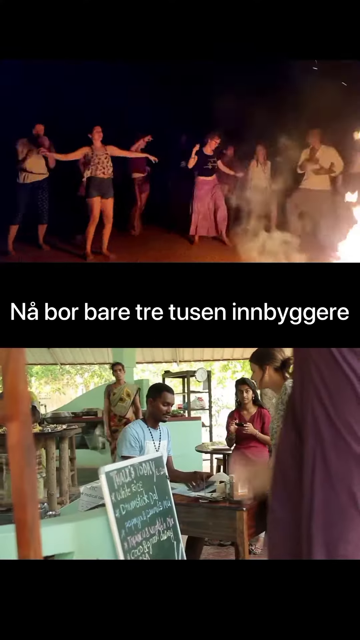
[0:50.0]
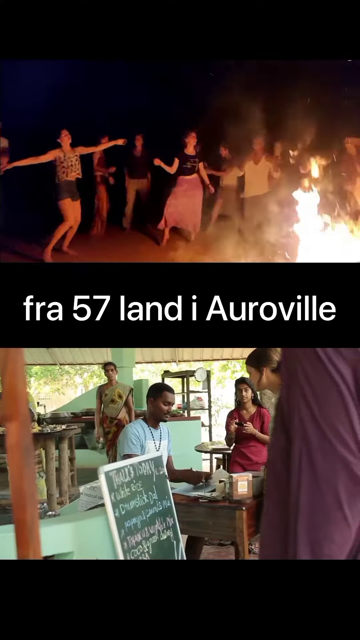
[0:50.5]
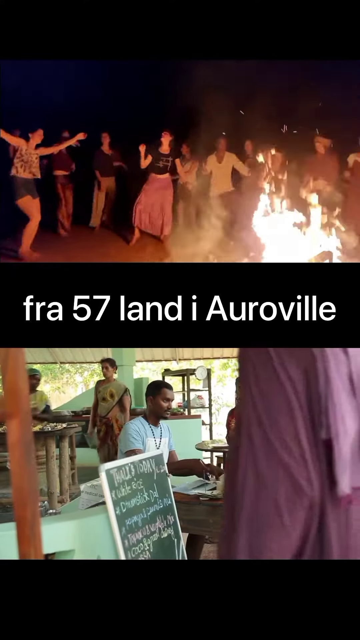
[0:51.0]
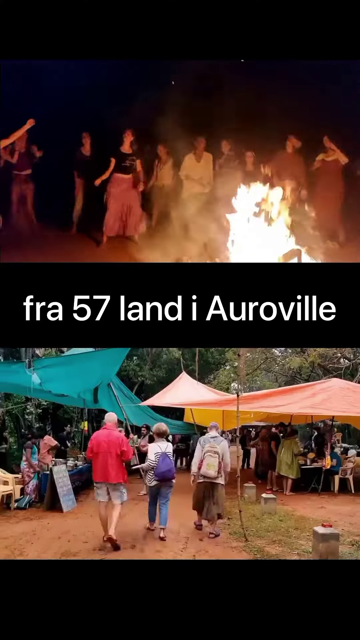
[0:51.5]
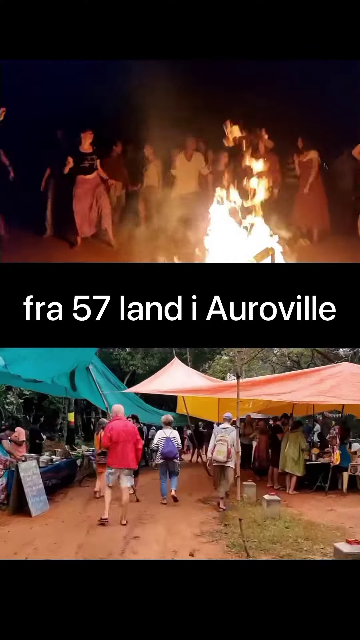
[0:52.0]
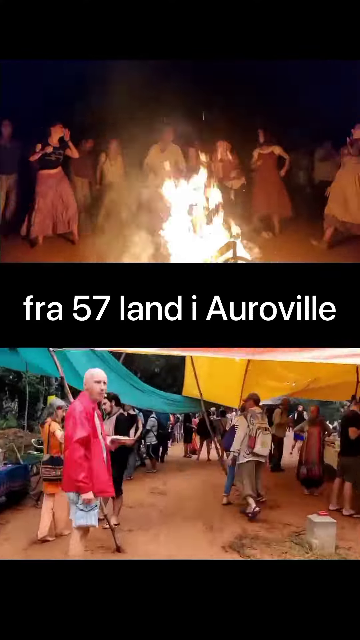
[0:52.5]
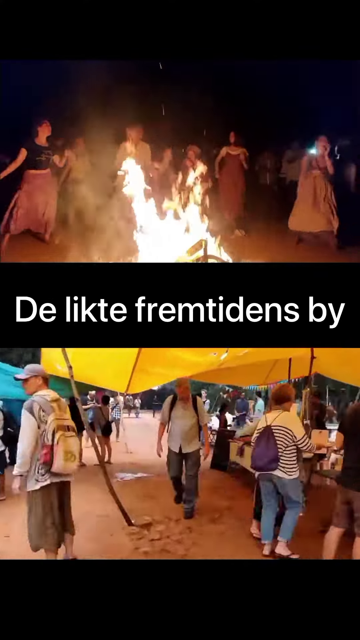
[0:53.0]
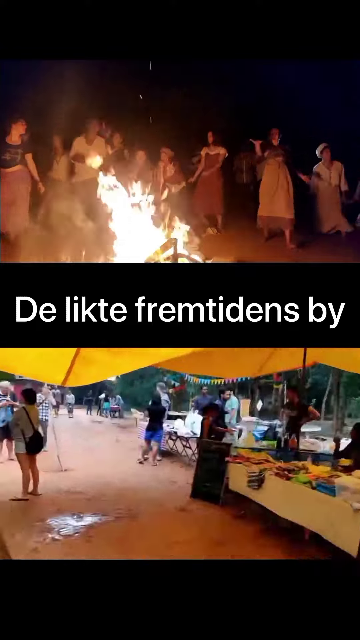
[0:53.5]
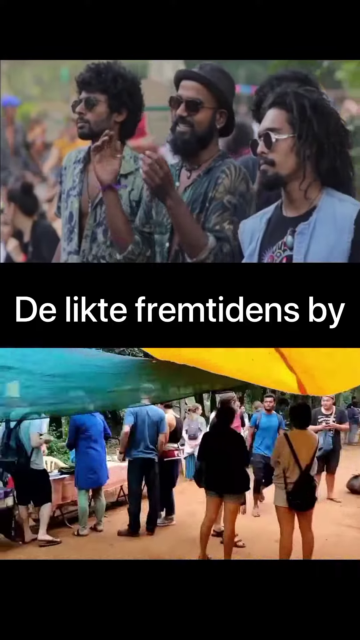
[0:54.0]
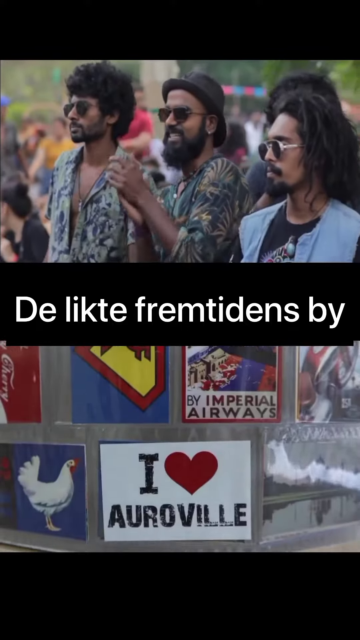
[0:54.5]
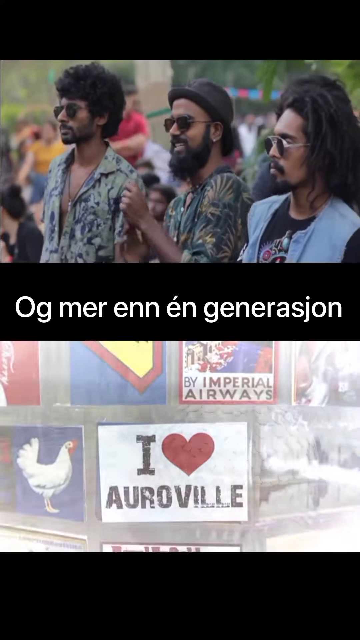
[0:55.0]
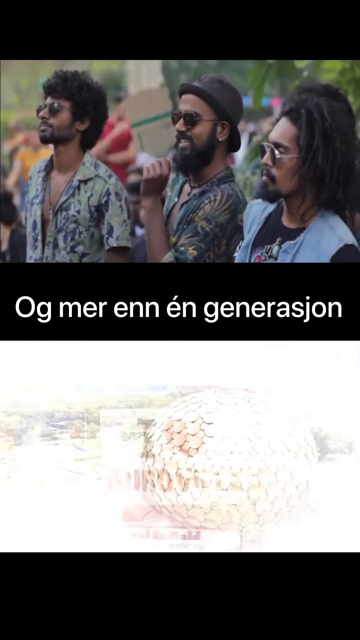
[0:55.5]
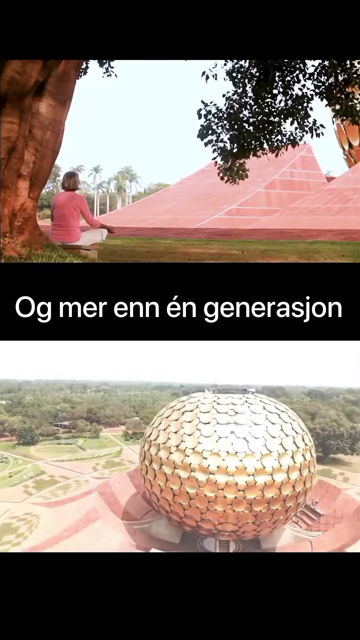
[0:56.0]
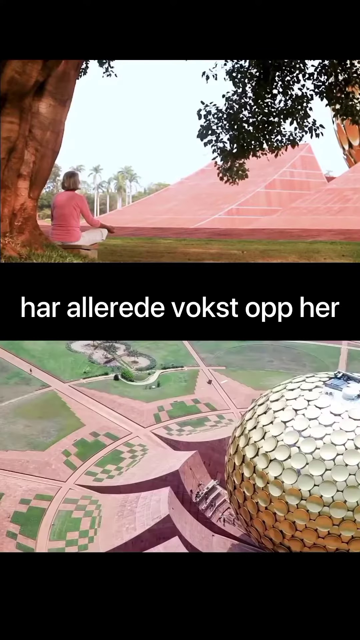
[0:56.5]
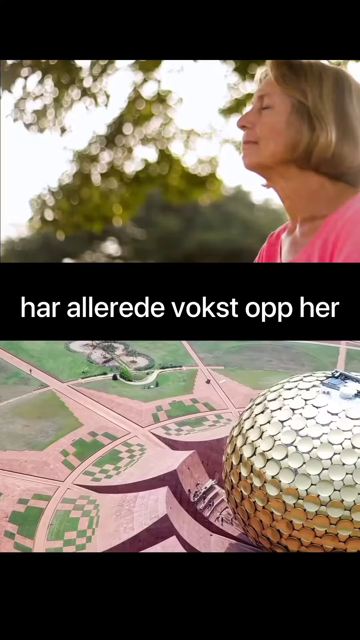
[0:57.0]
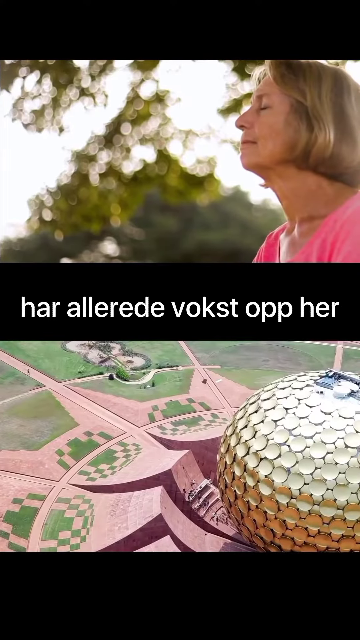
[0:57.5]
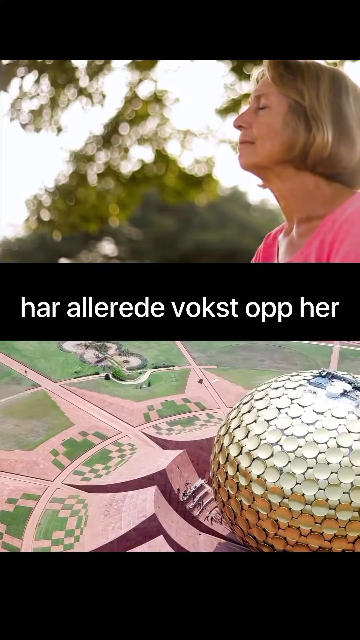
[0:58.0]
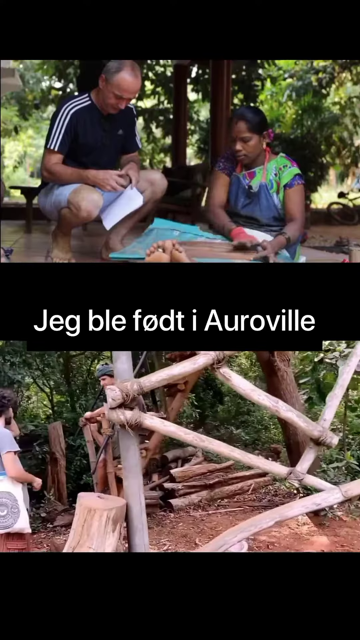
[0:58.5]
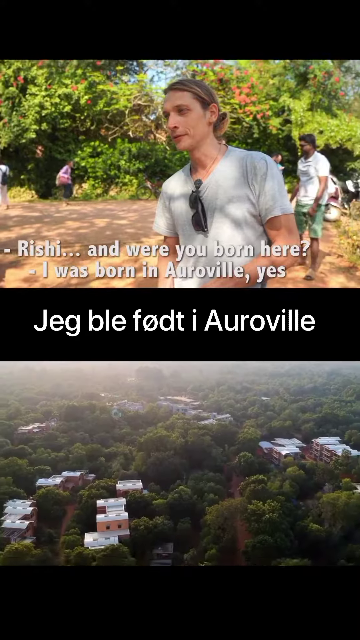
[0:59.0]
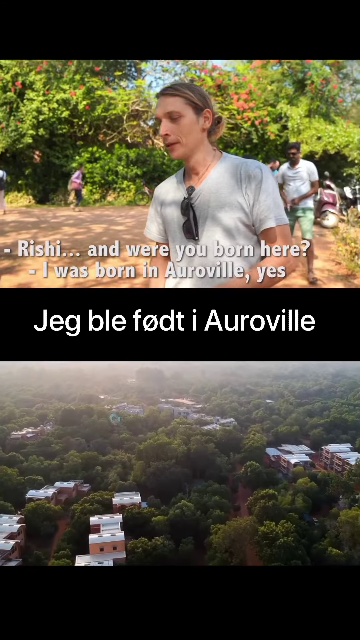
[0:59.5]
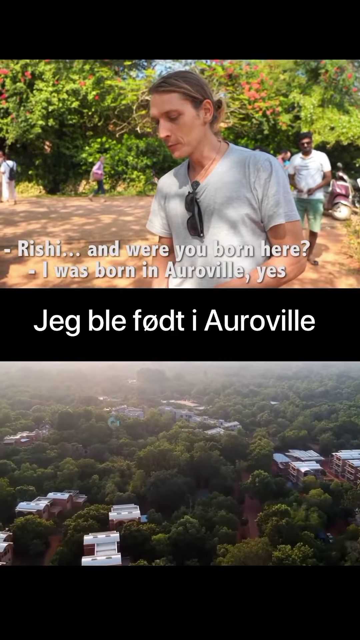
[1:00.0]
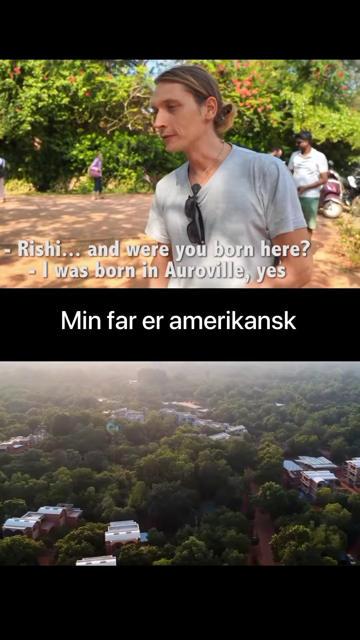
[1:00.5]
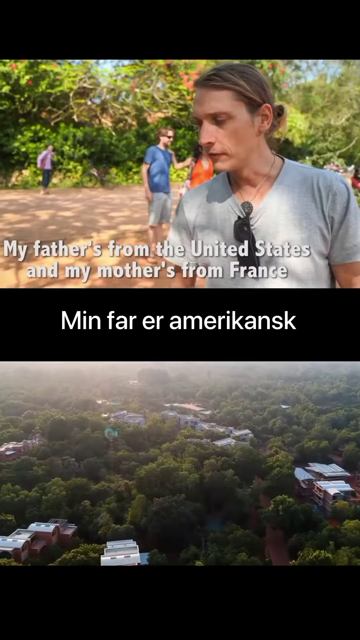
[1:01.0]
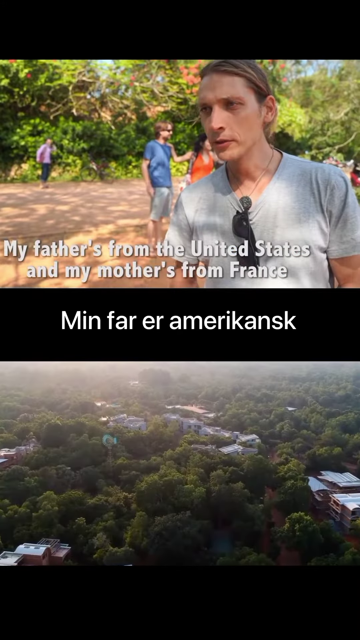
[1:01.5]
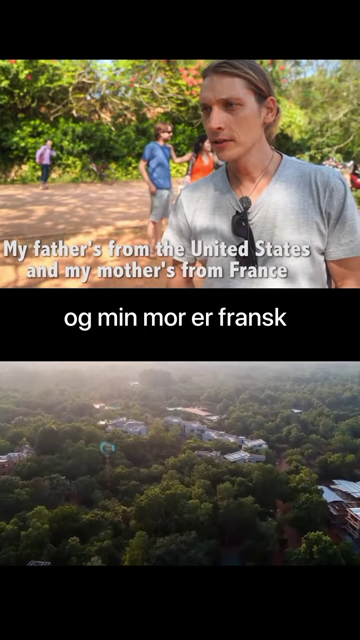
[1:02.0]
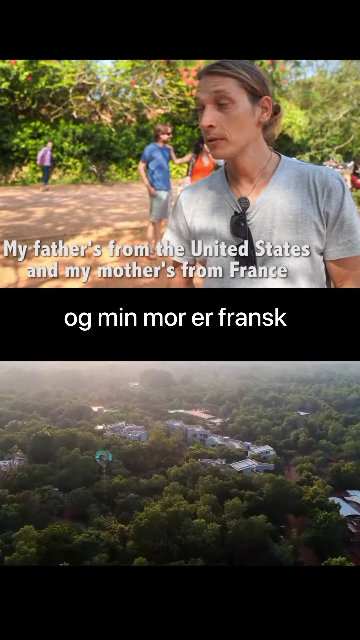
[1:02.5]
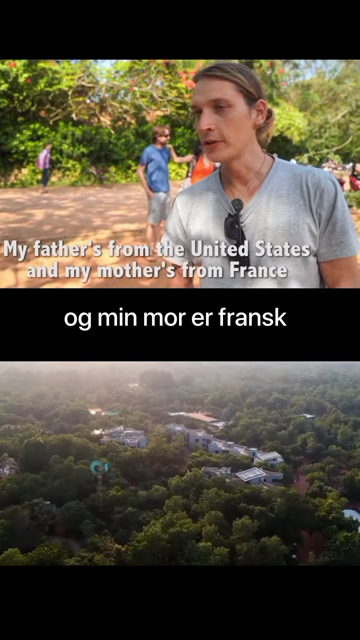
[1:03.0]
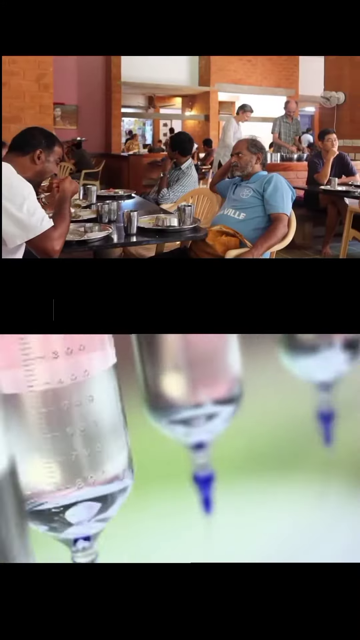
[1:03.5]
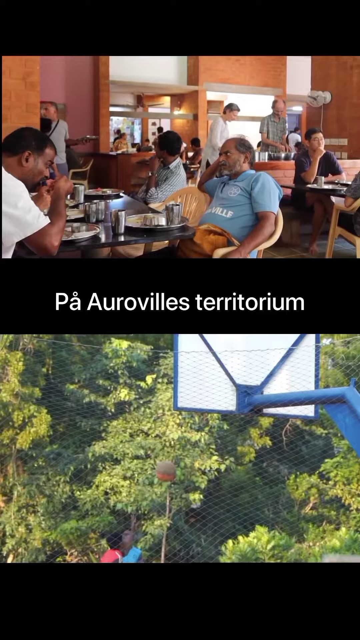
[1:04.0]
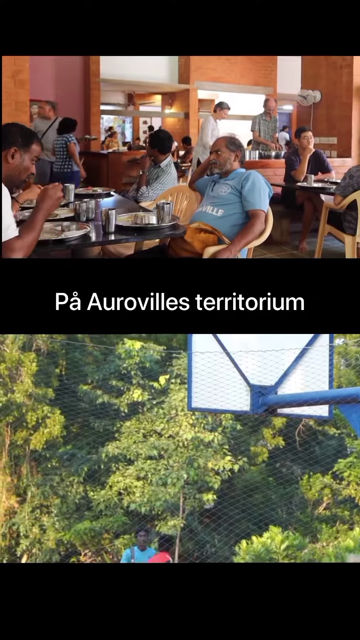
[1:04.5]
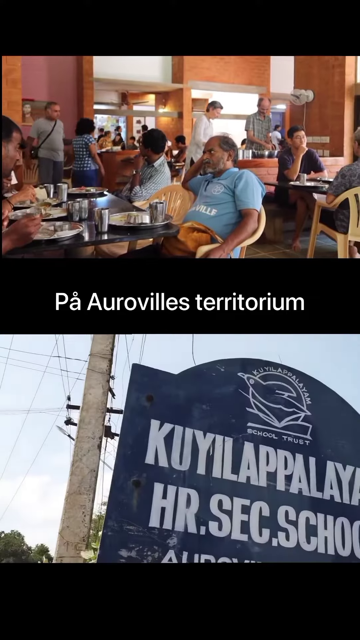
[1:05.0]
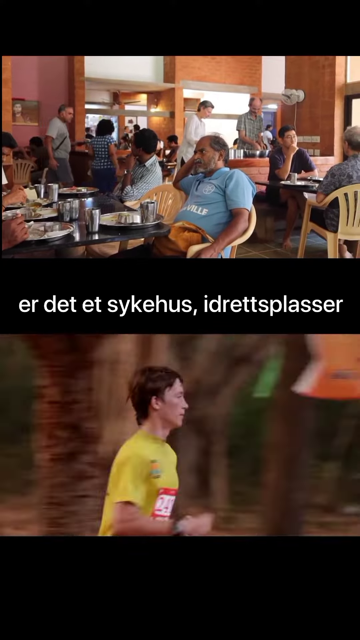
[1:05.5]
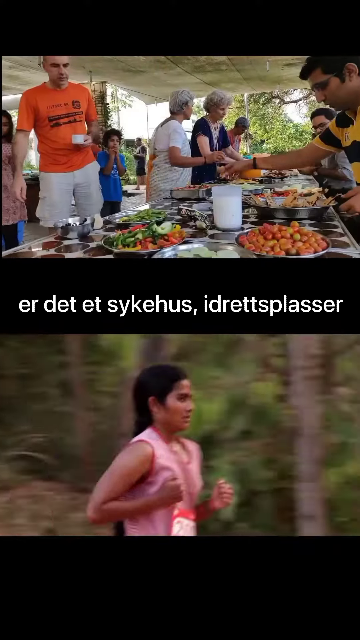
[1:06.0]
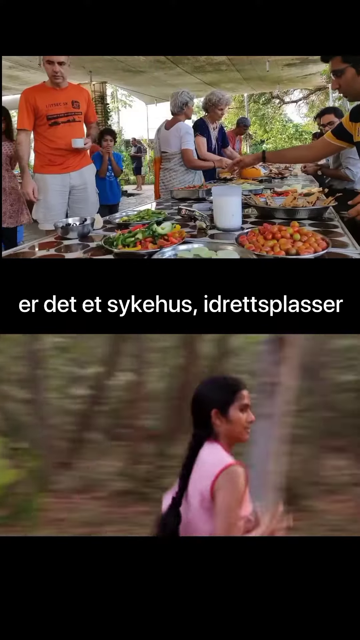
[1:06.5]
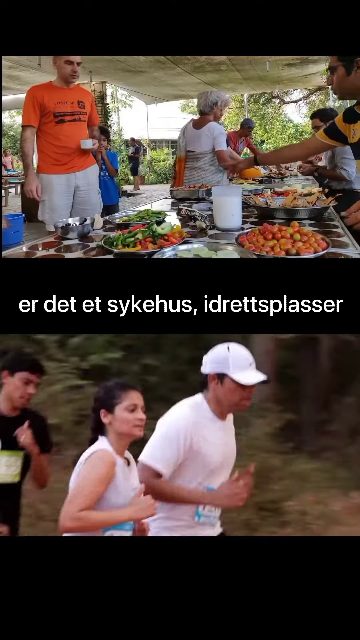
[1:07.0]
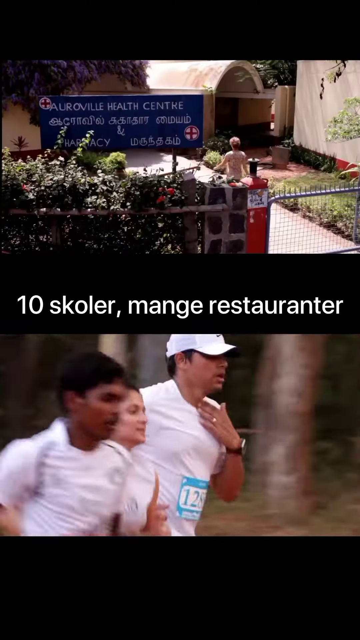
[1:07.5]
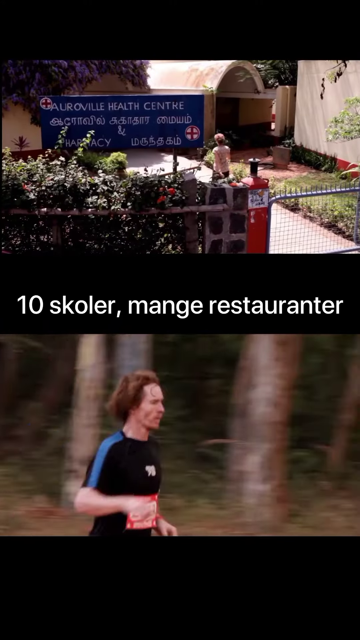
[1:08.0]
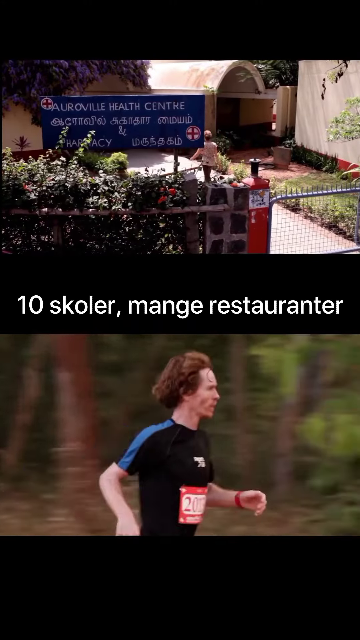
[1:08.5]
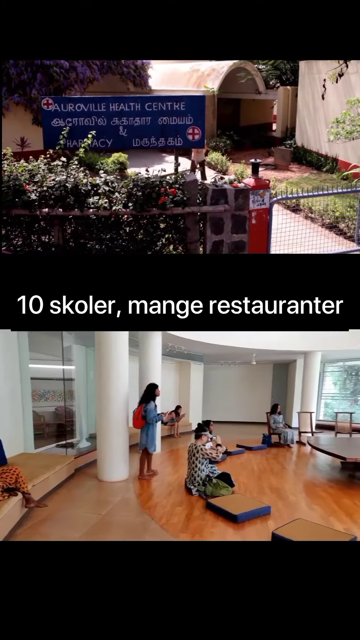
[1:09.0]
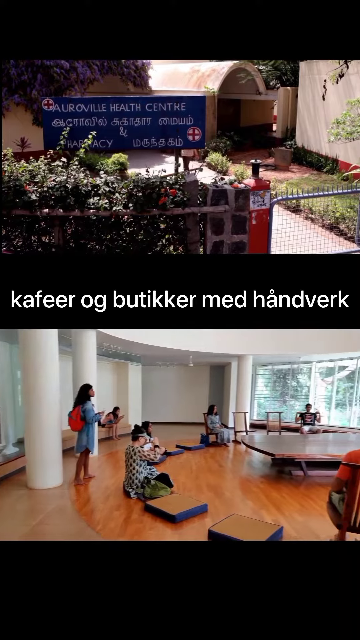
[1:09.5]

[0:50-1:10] The text "Auroville" and "I heart Auroville" appears on screen, apparently the name of the place shown. A spot in the middle of a large forest is shown. A man says he was born in Auroville, that his father is from America and his mother from France. People queue up at a desk, in what may be a school or a tourist area. People dance around a fire, and others run and play games.